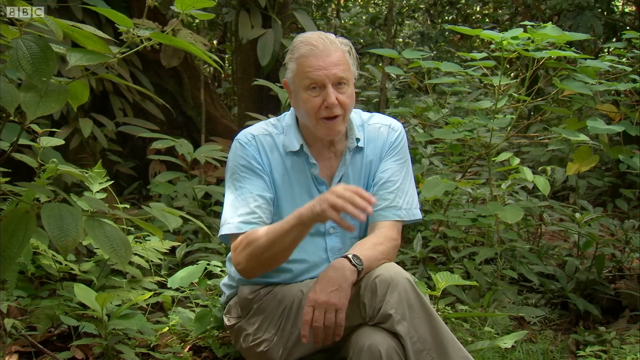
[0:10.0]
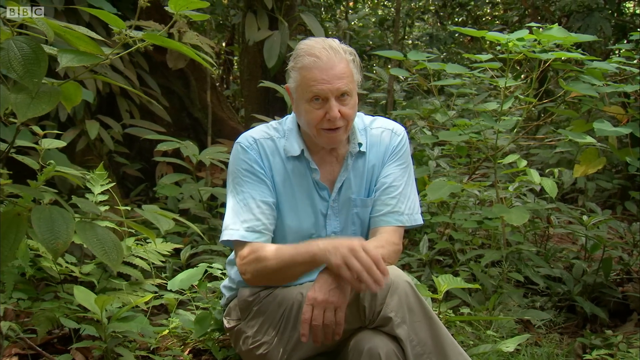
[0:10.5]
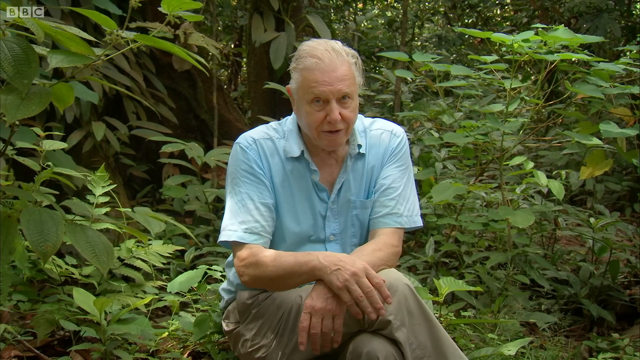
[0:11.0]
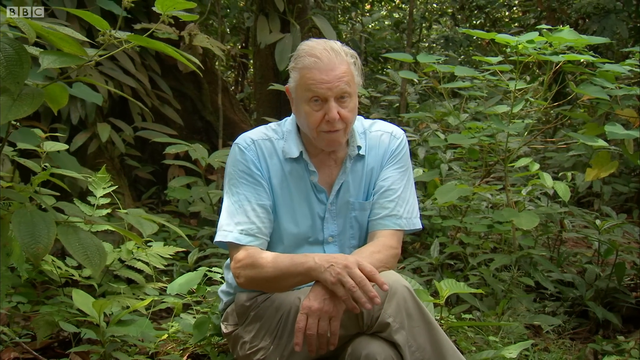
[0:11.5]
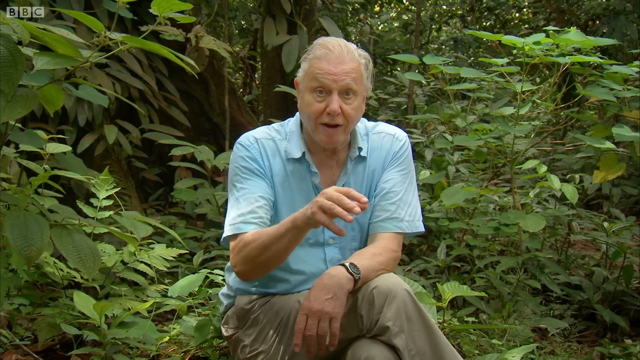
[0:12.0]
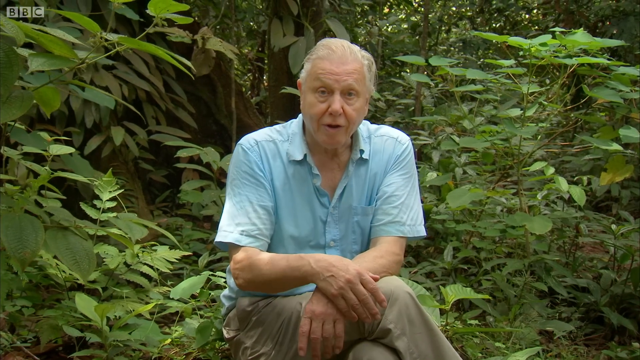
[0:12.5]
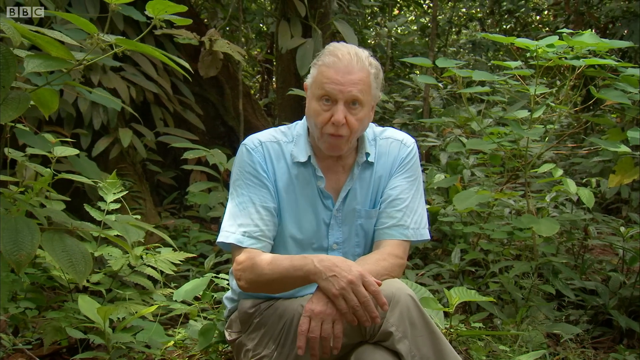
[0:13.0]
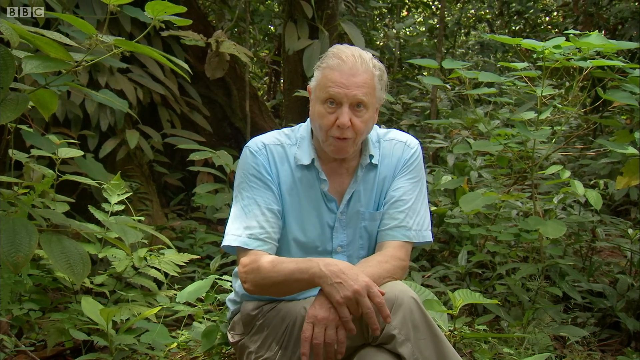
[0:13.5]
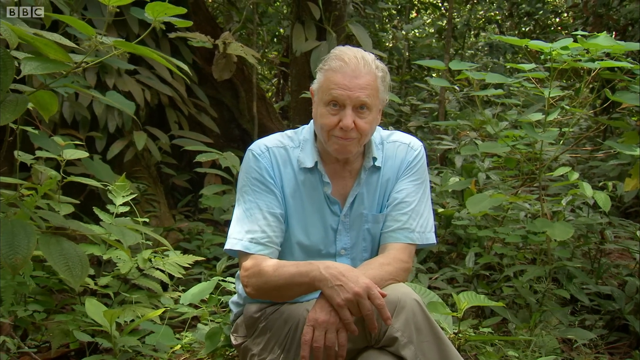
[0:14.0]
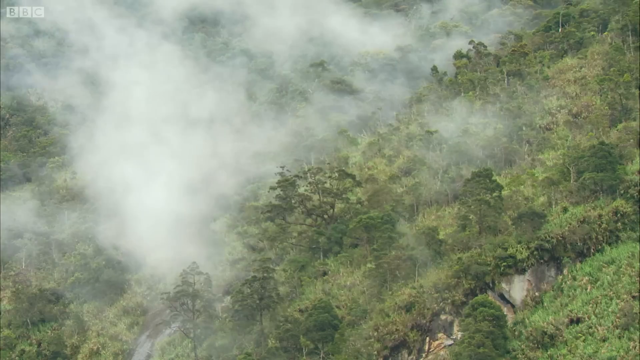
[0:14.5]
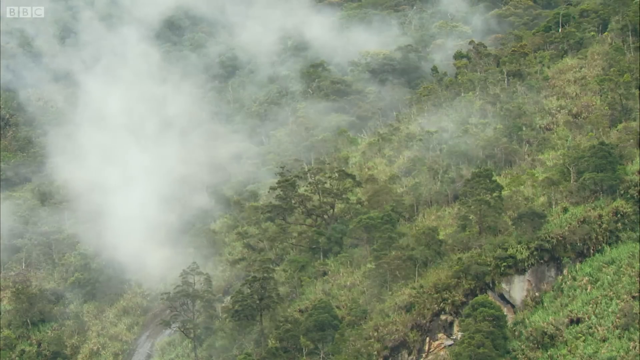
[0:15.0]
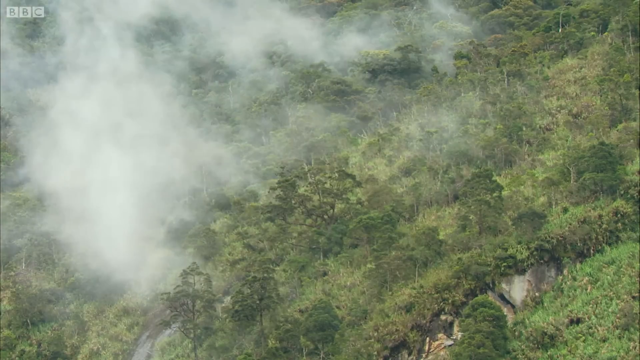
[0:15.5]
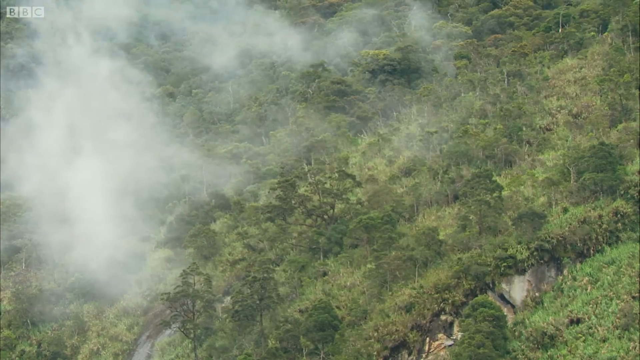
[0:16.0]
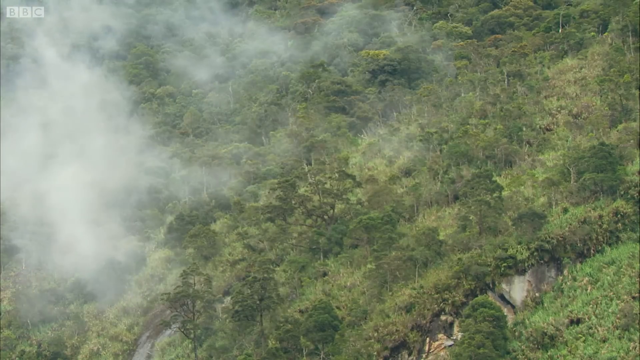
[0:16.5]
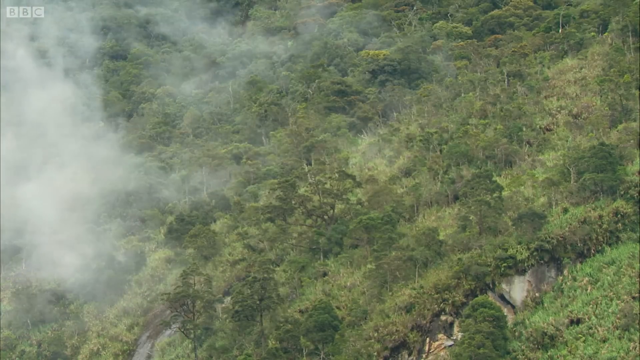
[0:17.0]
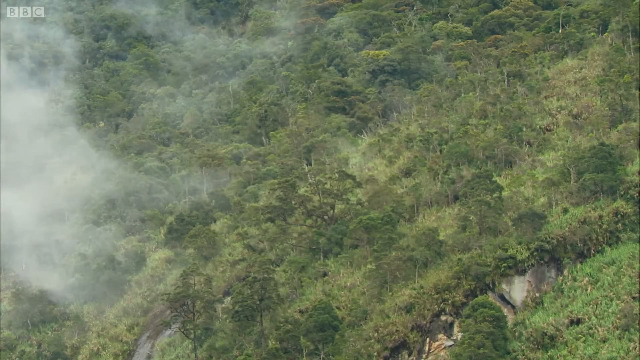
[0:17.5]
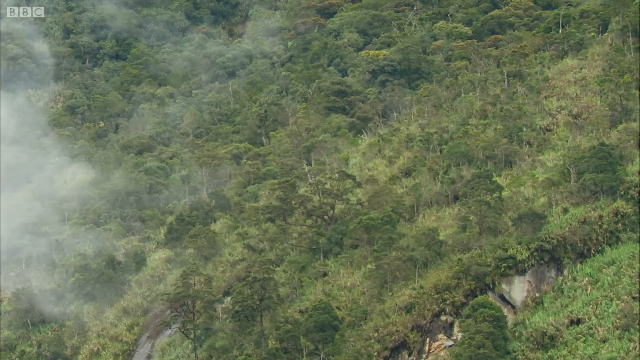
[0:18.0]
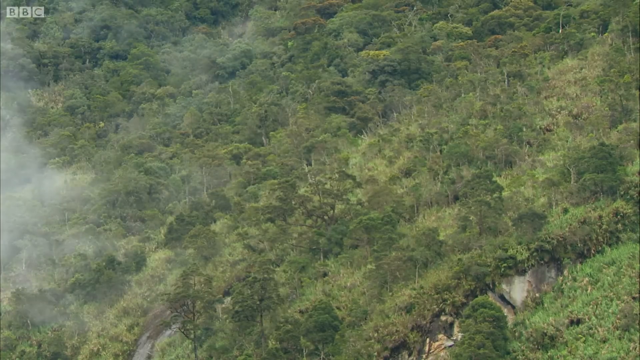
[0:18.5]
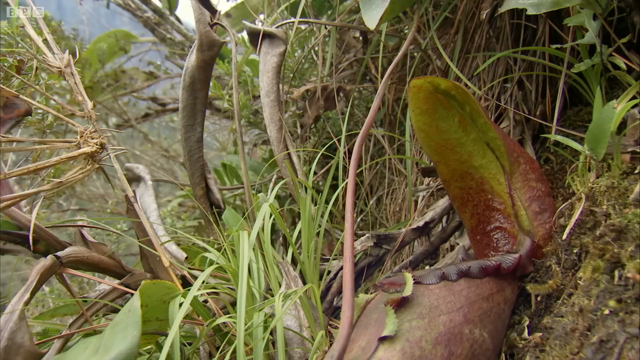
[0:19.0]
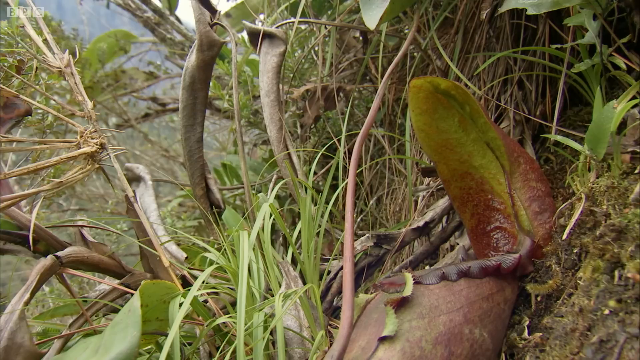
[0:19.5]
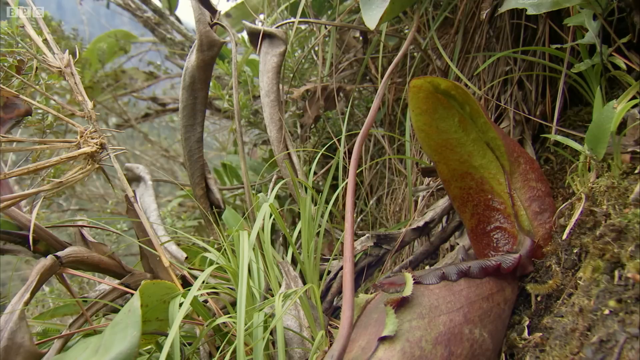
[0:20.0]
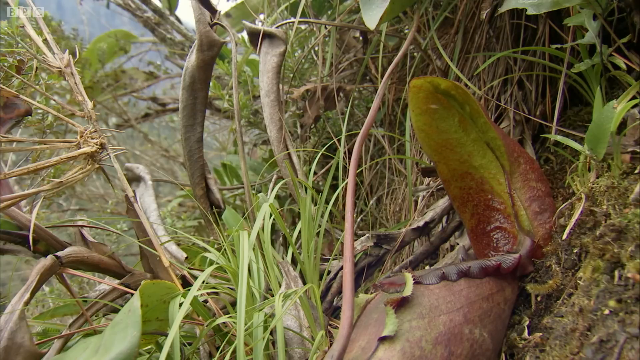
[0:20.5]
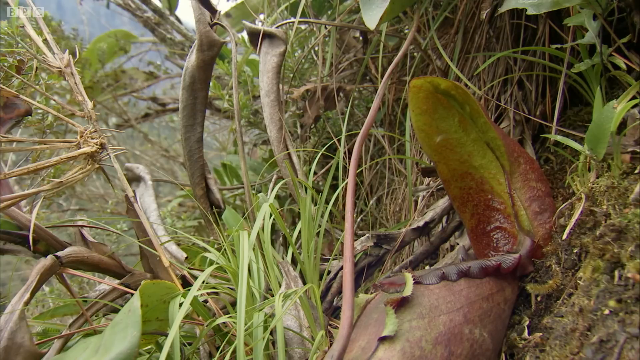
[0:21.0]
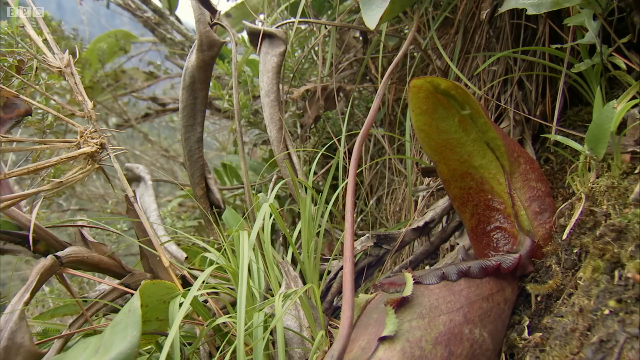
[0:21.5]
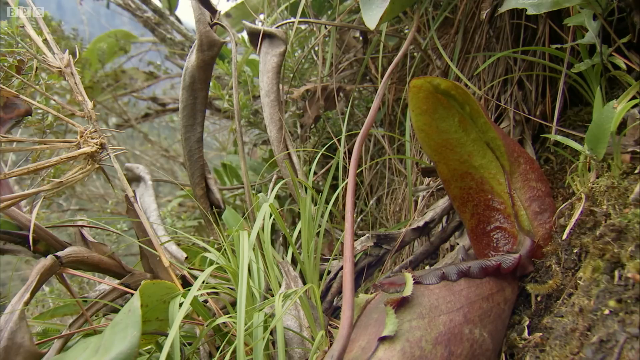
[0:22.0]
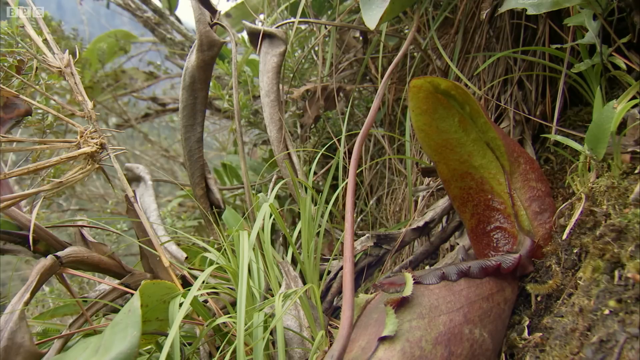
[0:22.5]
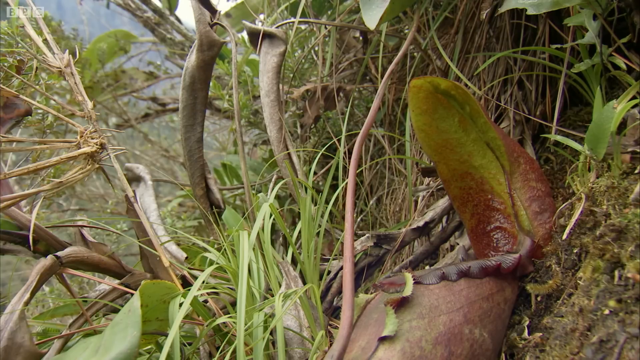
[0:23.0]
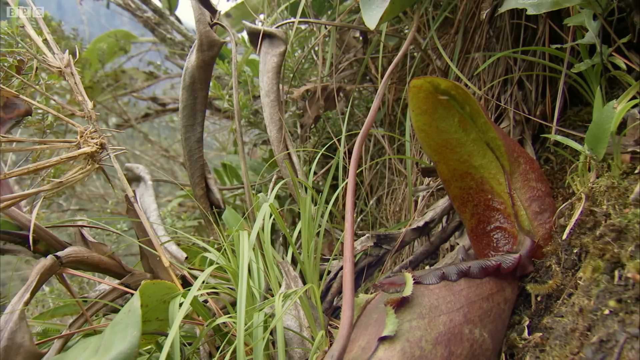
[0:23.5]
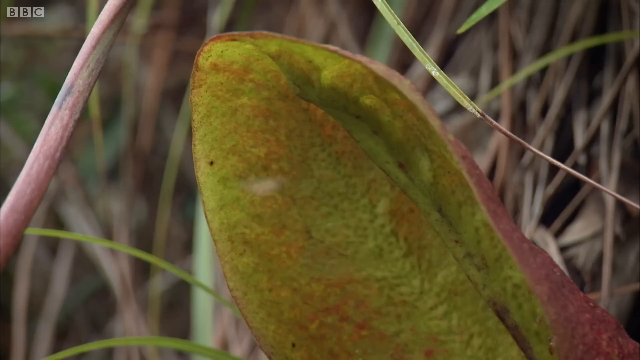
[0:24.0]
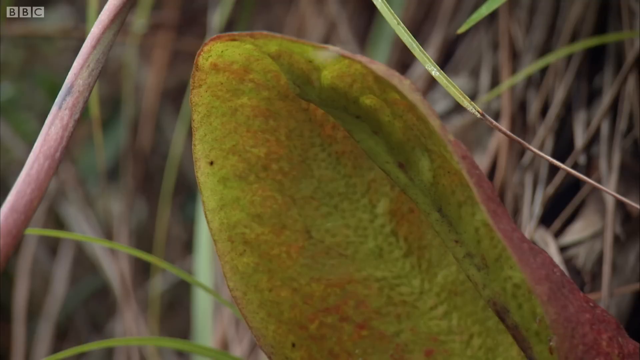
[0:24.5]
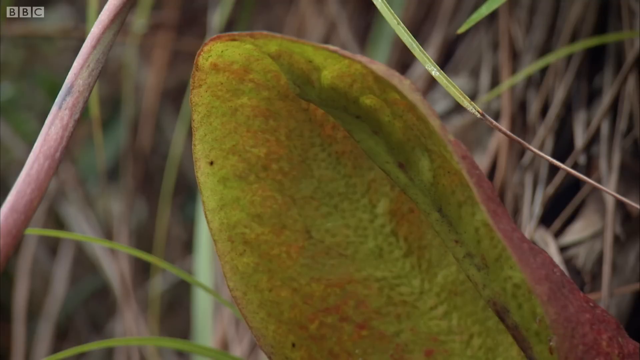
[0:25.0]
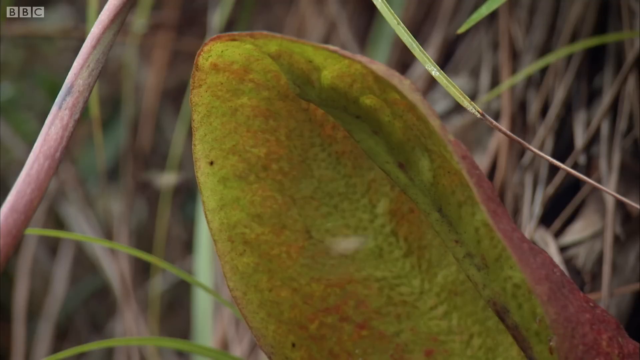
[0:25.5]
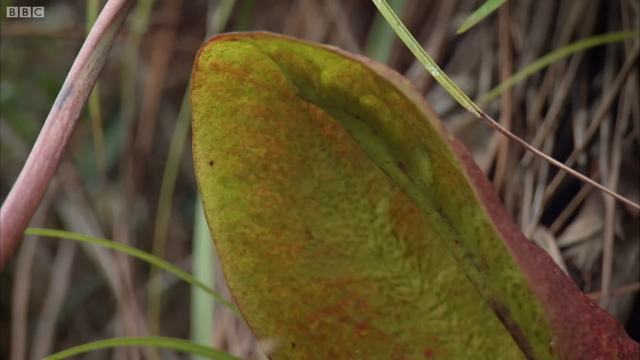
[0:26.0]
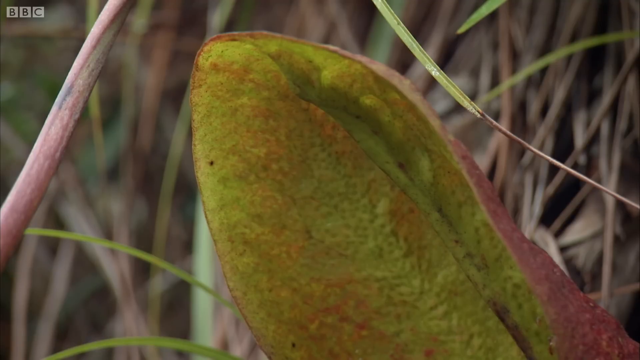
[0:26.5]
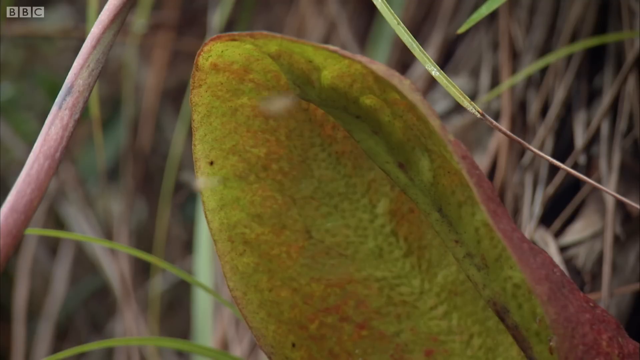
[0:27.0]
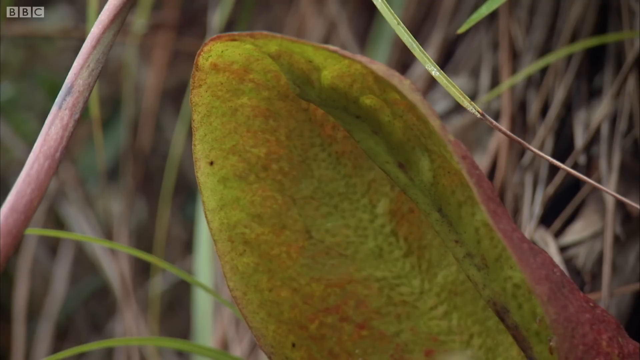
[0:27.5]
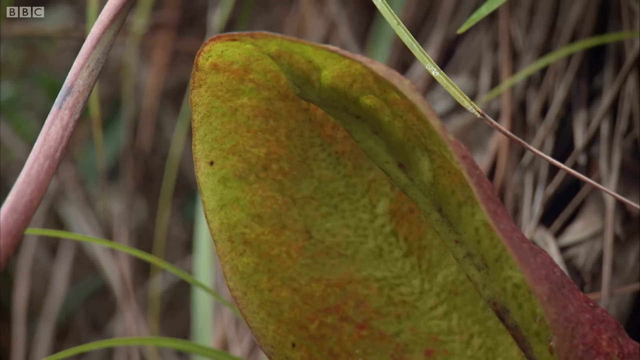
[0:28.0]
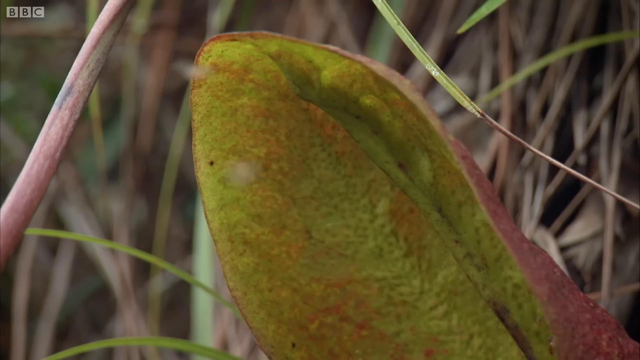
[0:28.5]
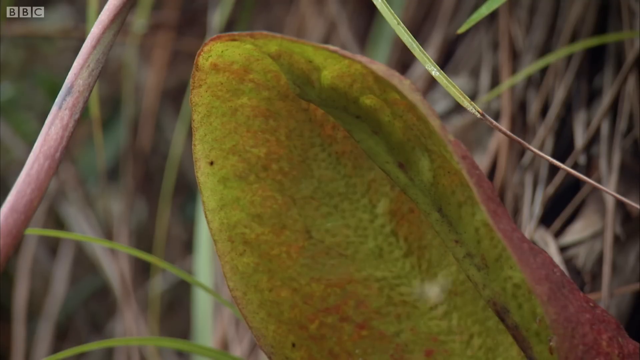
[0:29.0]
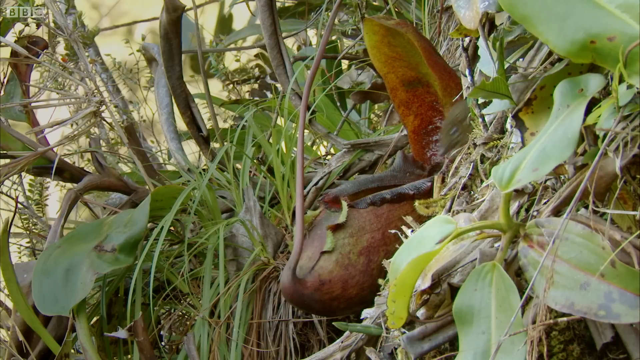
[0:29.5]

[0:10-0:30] The man continues speaking. The video then cuts to a distant view from above of a forest or jungle area, where it looks almost as if smoke is coming from the tops of the trees. The deep green trees fill the entire shot. The next scene shows a plant with large, long, thin leaves that are light green in the center and reddish brown around the edges. The video zooms in on the plant, showing a single leaf closer up, with small insects flying around it. Around the highlighted plant are other kinds of plants, including long, thin grasses and other big lush leaves. At the very end, a small mammal similar to a groundhog, with brown fur, pops out.